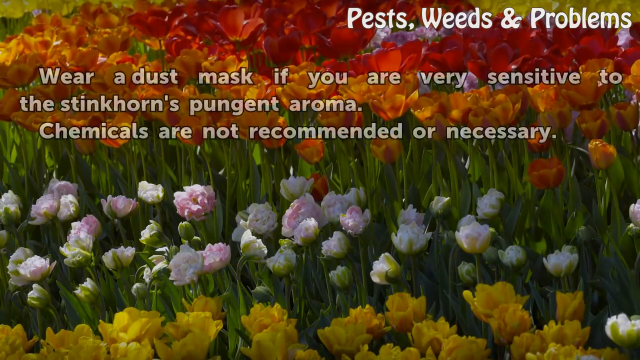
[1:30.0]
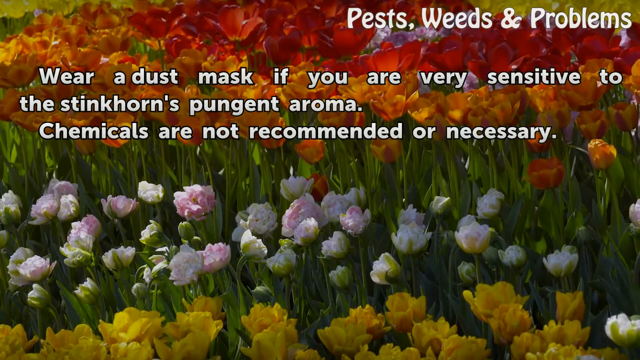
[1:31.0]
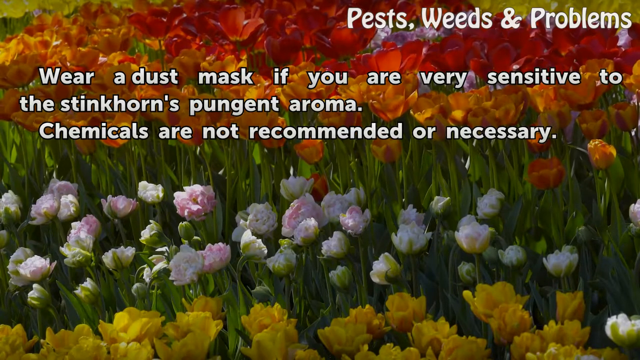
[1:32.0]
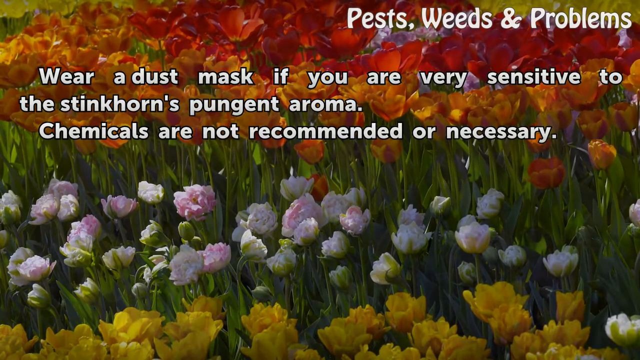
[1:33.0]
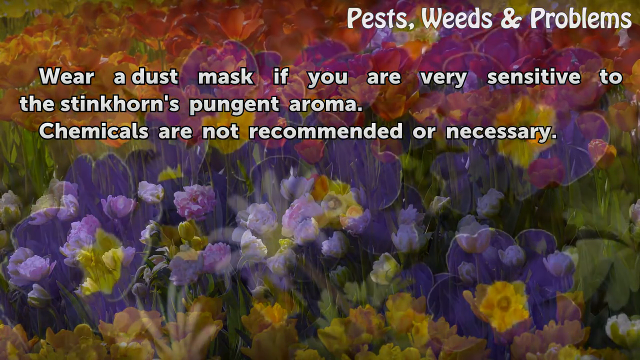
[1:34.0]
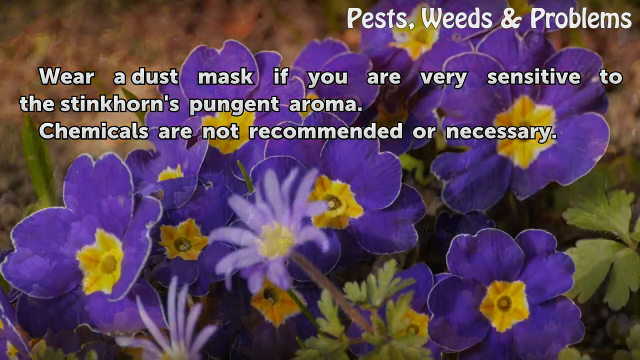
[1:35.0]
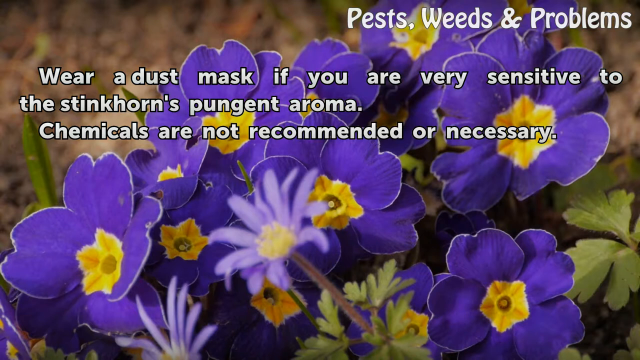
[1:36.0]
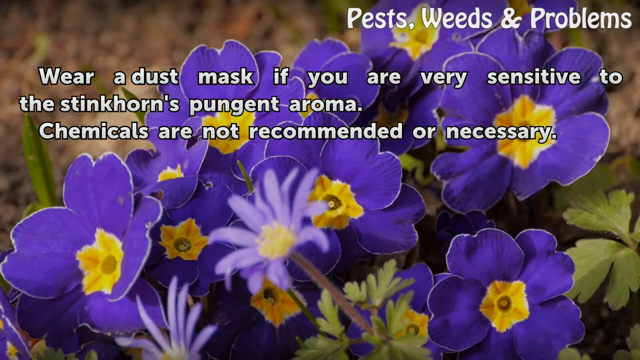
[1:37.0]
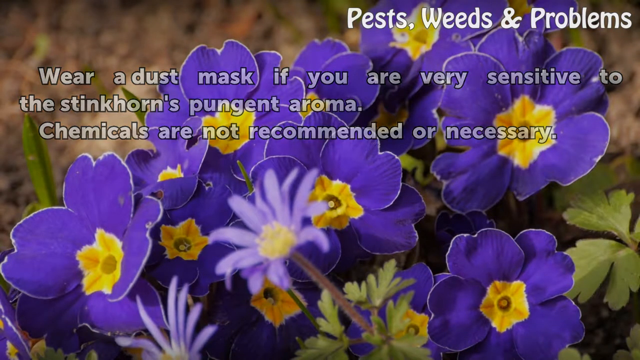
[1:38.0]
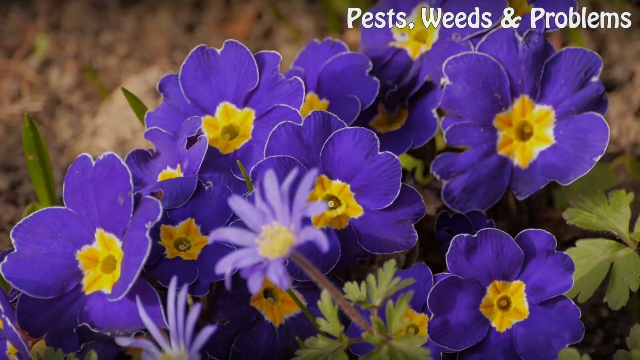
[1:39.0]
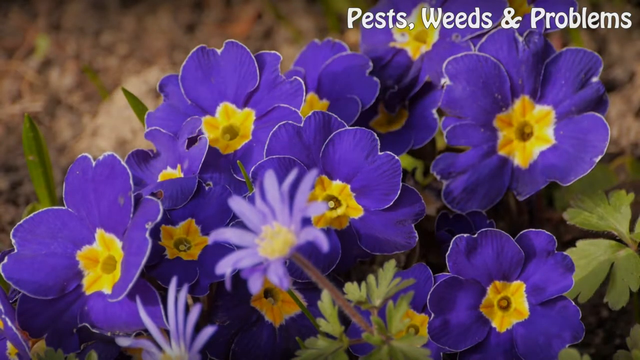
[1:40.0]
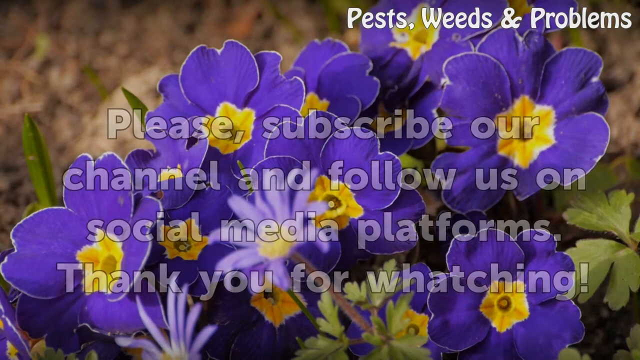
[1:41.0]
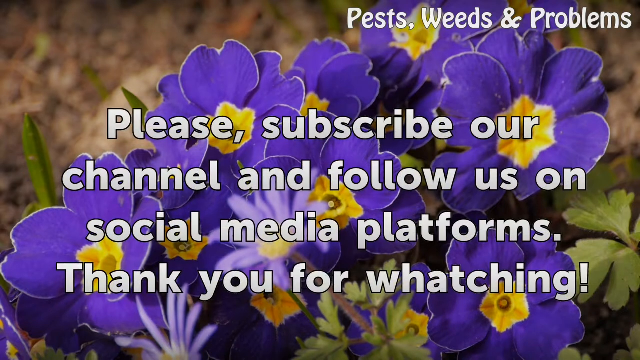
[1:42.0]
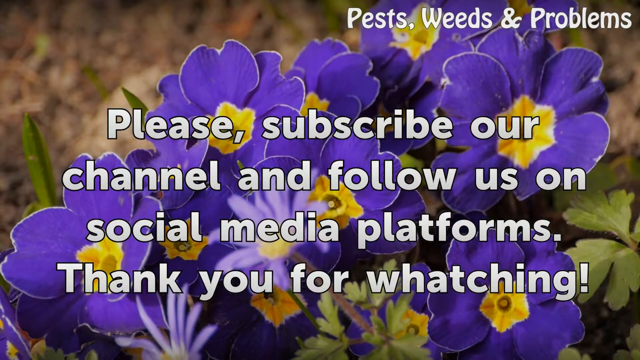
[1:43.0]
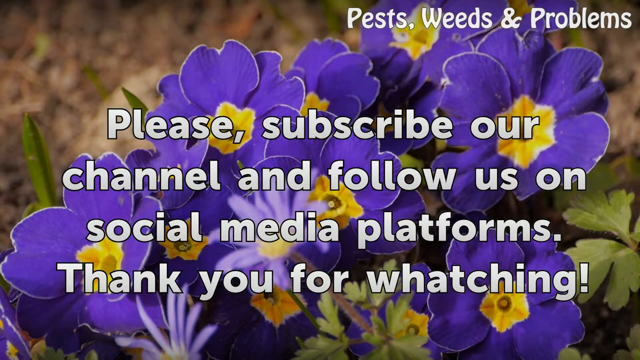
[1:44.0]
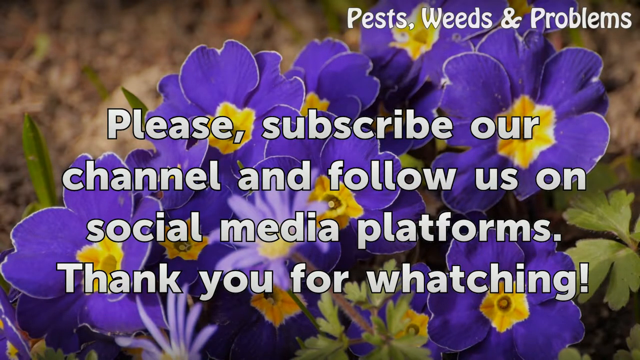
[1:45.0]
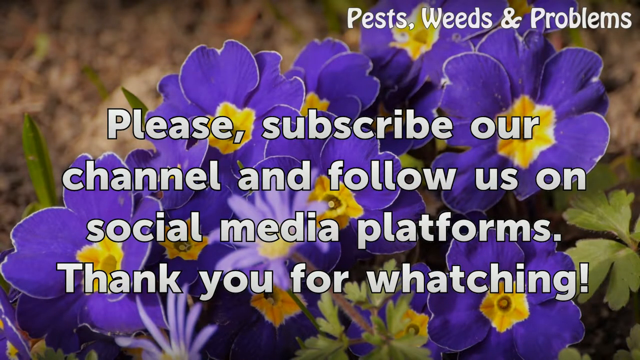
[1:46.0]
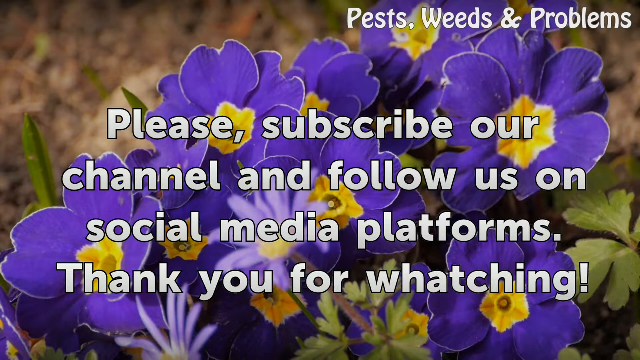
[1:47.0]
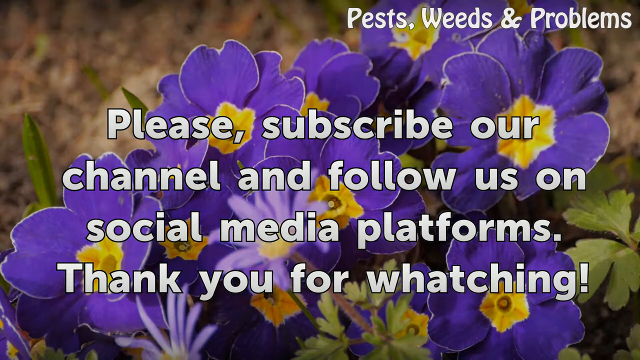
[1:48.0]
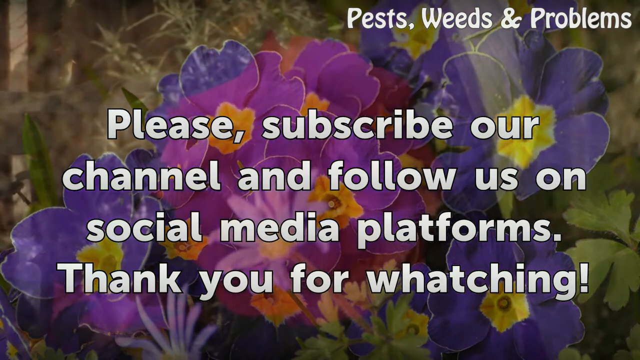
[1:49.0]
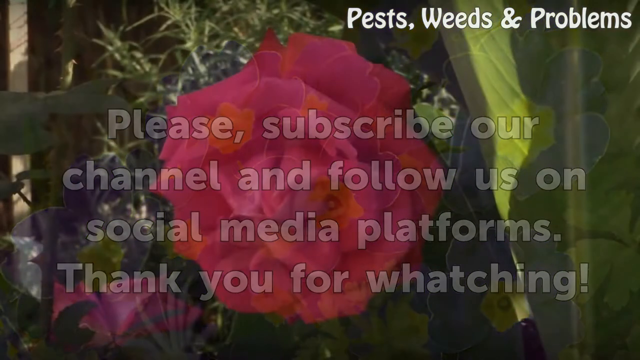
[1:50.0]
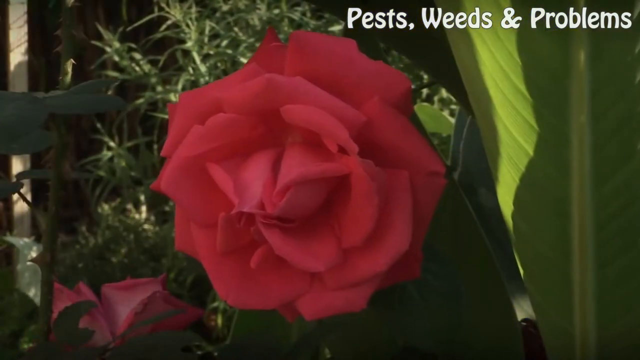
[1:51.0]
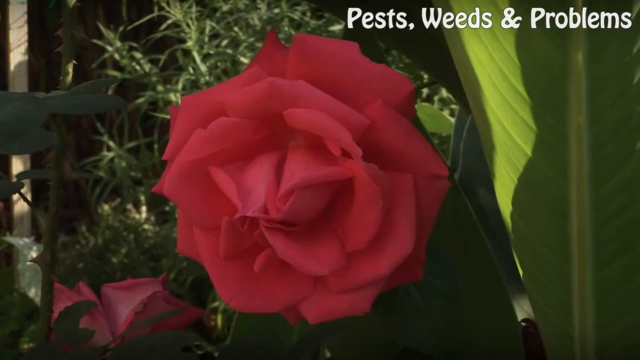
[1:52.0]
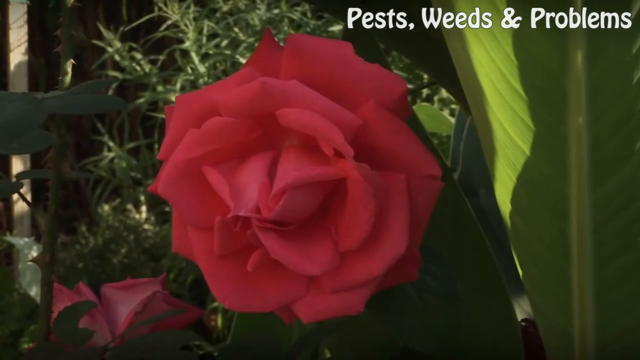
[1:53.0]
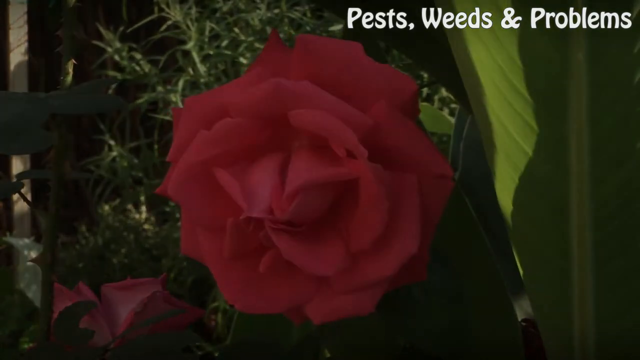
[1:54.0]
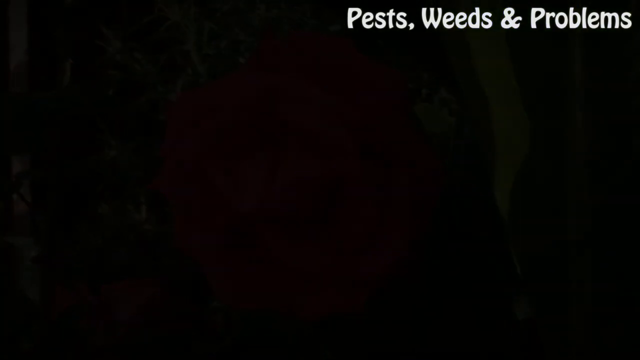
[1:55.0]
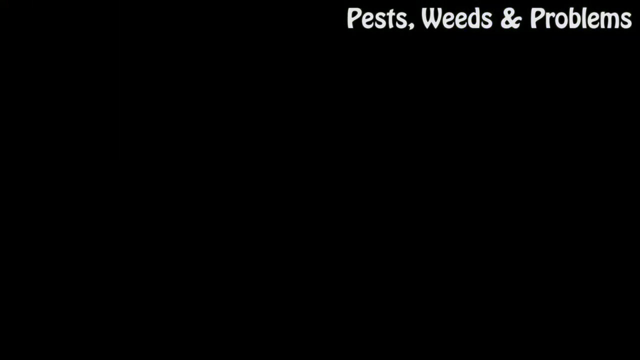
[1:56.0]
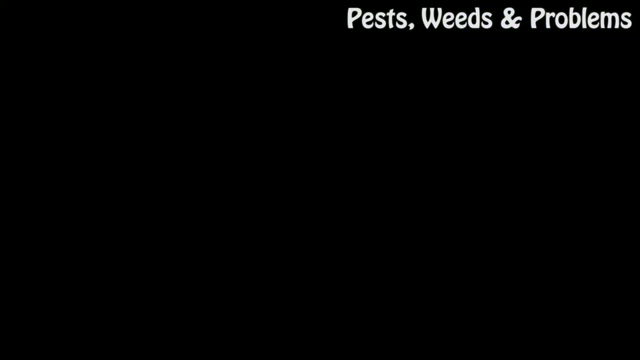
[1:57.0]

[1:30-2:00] Rows of yellow, white, orange, red and purple flowers are in the background. White letters over the top read "wear a dust mask if you are very sensitive to the stinkhorns pungent aroma" and "chemicals are not recommended or necessary." While those letters stay in front, the background switches to what look like forget-me-nots: purple flowers with yellow on the inside, seemingly about ten of them, along with some greenery of leaves and a couple of extra flowers at the top. As the tips and warnings fade away, text appears reading "Please subscribe our channel and follow us on social media platforms" and "Thank you for watching," with a typo in "watching," which is spelled with an extra h as "wathching." As the background changes, the letters fade away and the screen shows a close-up of a single pink rose by itself. It then fades to black, ending on a black screen.